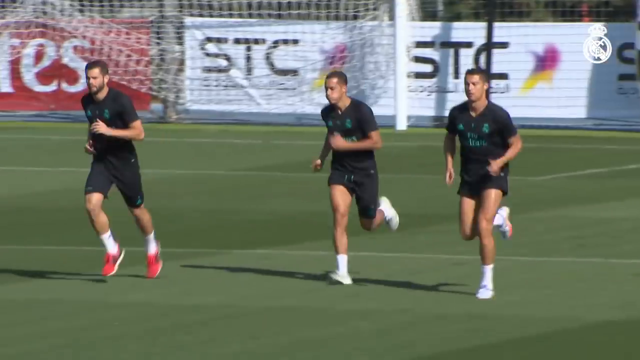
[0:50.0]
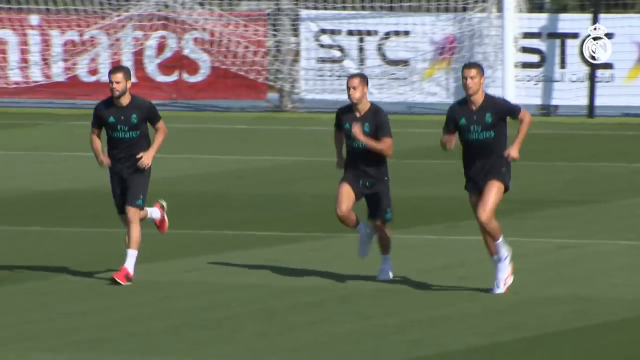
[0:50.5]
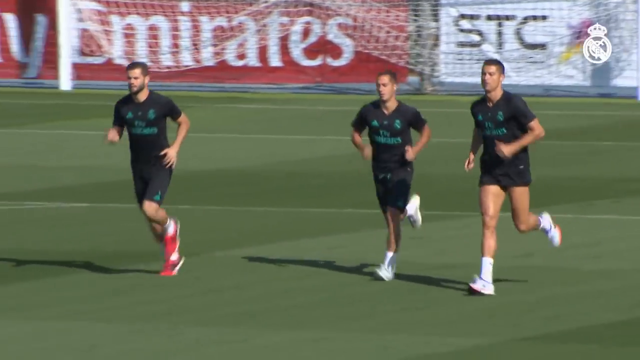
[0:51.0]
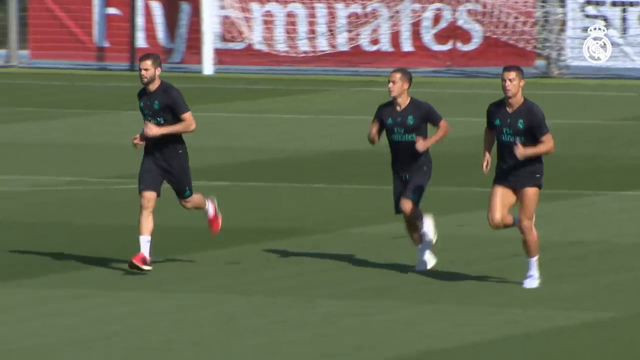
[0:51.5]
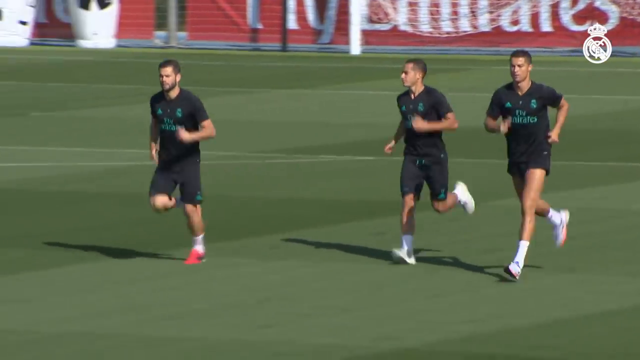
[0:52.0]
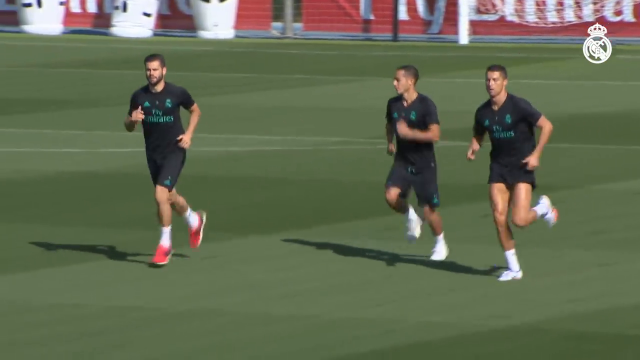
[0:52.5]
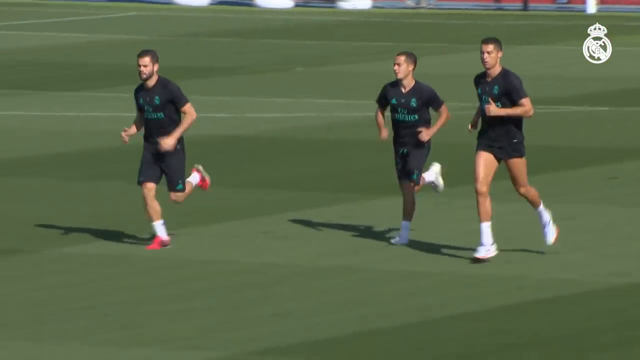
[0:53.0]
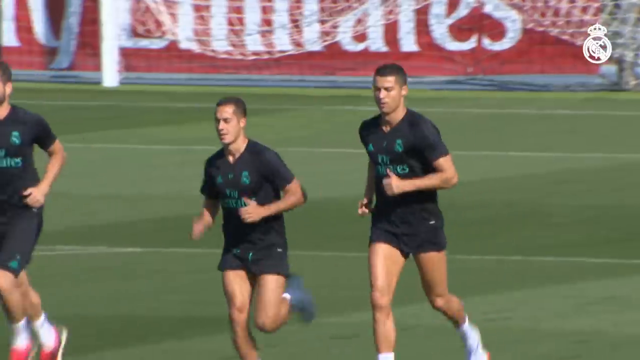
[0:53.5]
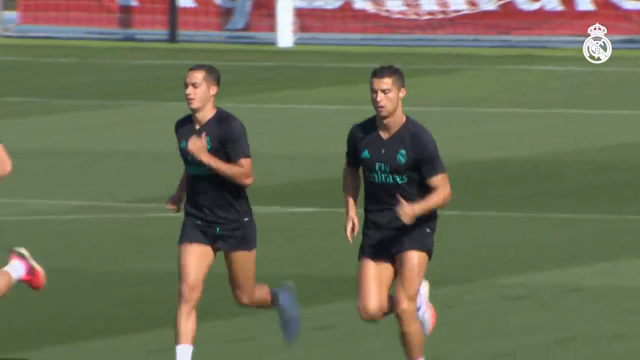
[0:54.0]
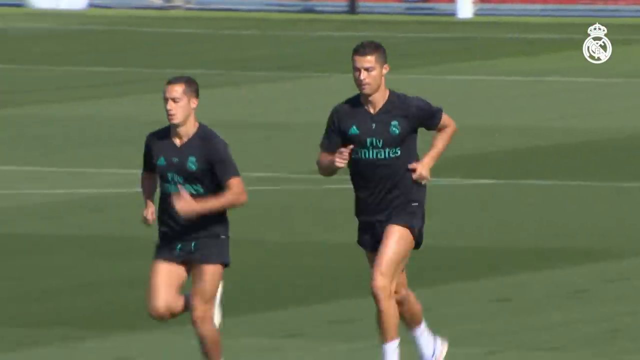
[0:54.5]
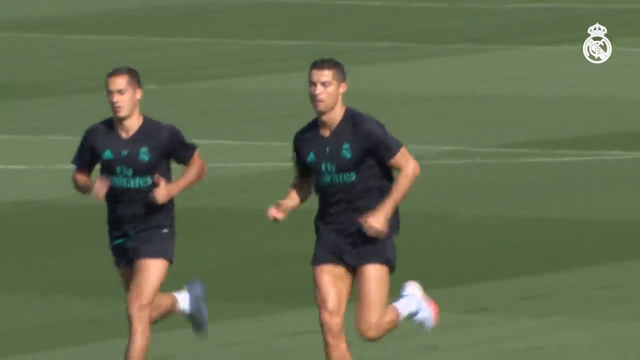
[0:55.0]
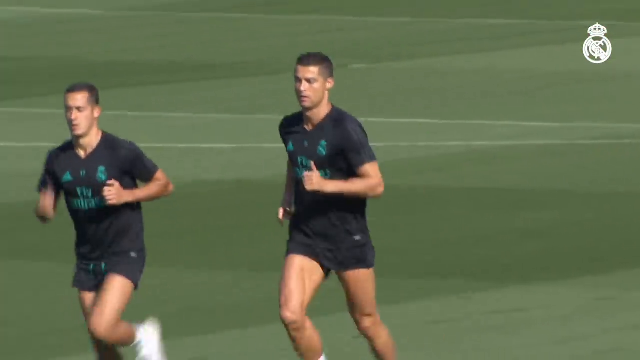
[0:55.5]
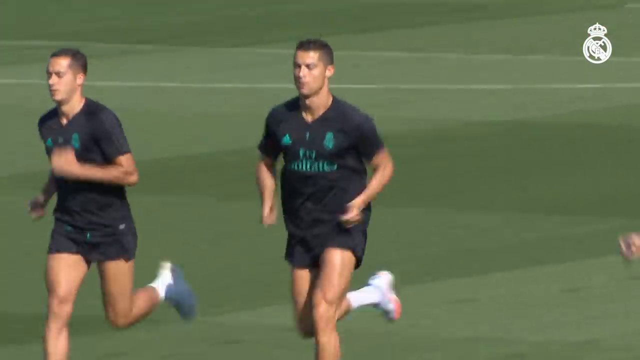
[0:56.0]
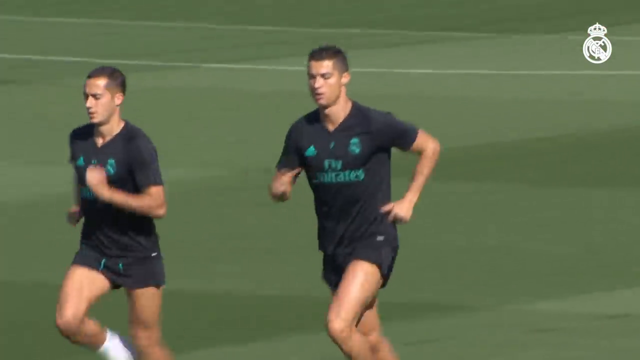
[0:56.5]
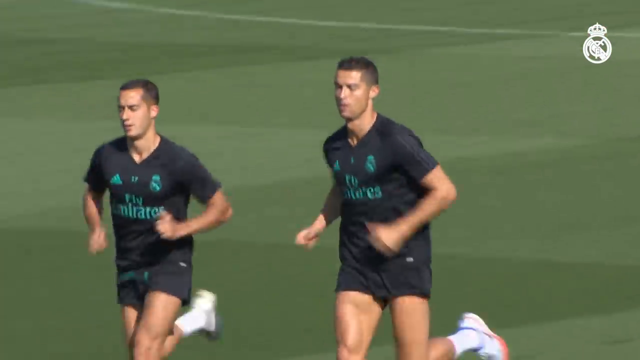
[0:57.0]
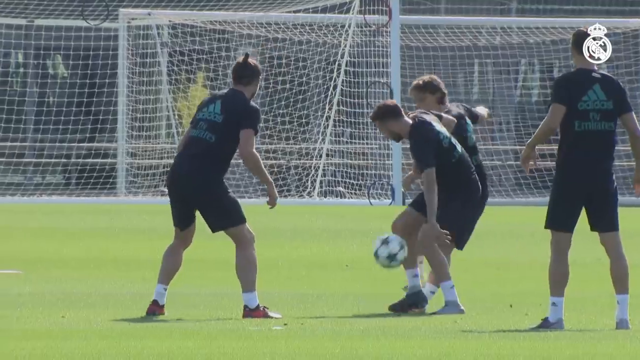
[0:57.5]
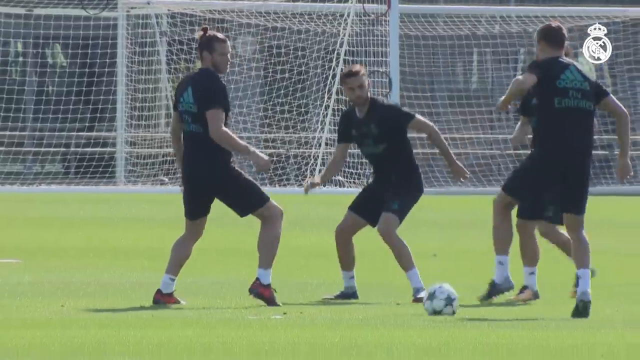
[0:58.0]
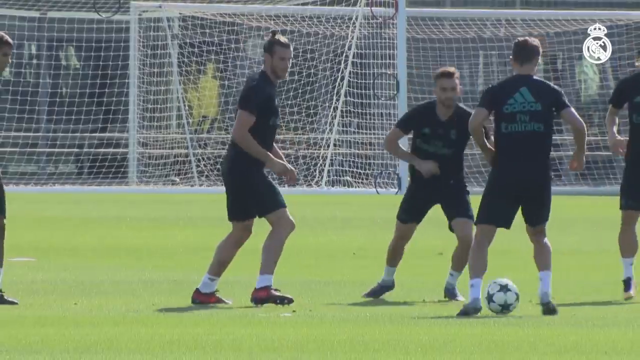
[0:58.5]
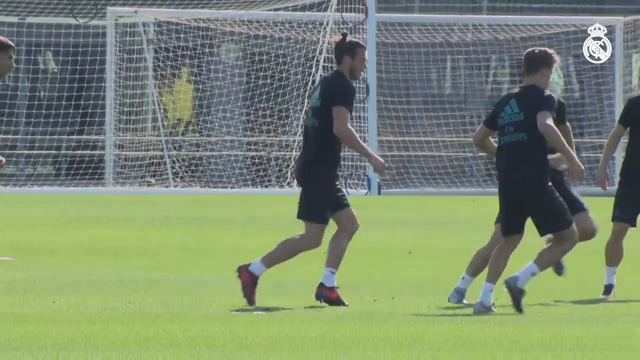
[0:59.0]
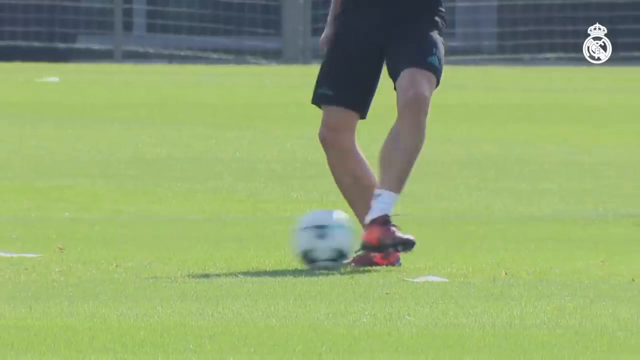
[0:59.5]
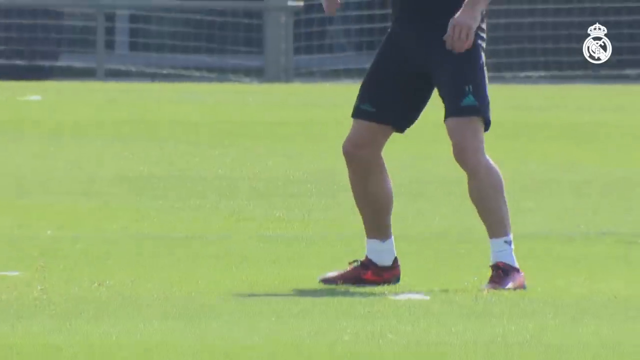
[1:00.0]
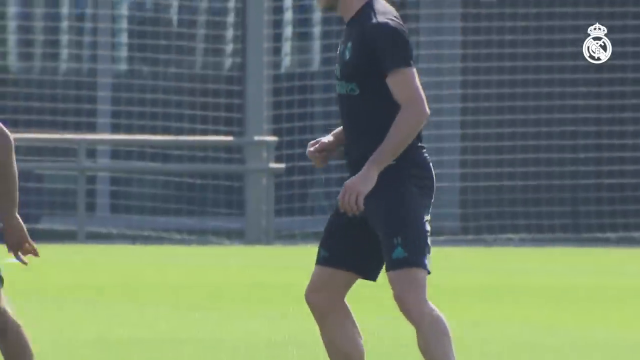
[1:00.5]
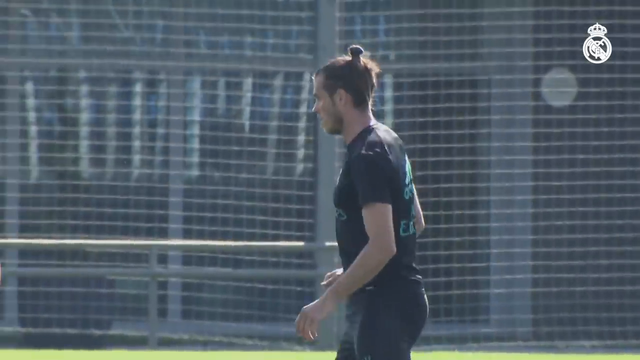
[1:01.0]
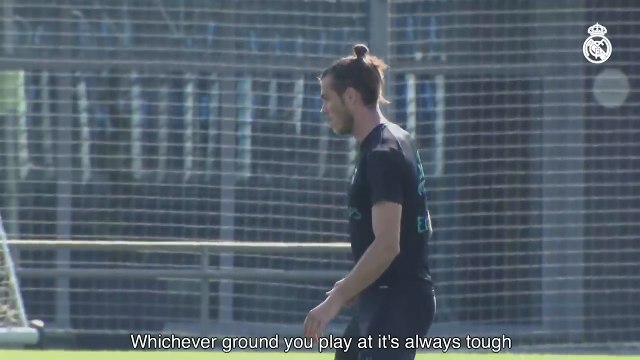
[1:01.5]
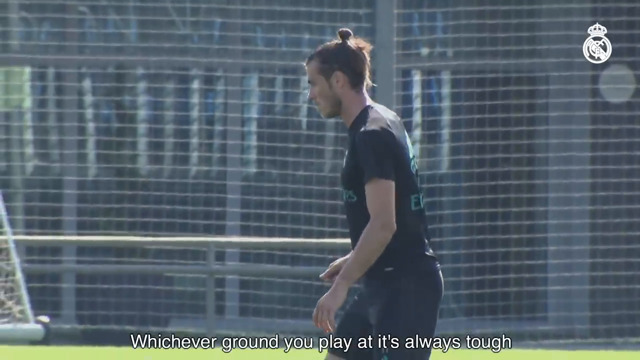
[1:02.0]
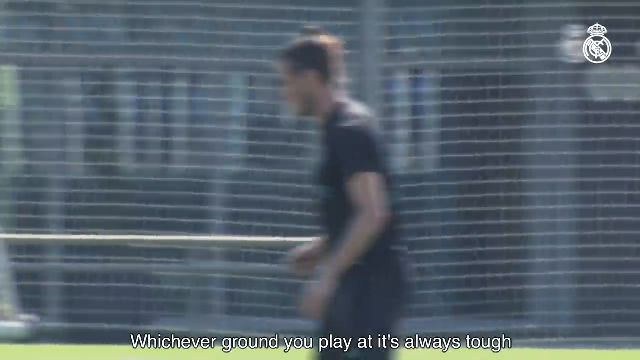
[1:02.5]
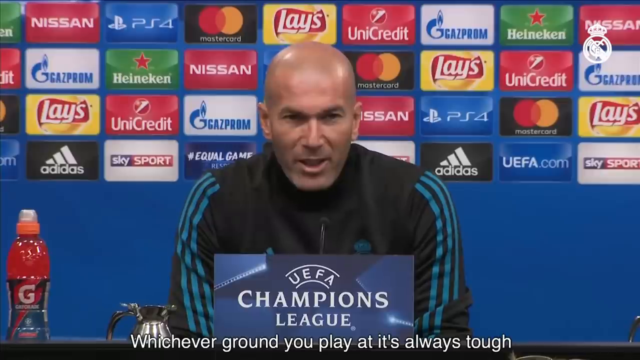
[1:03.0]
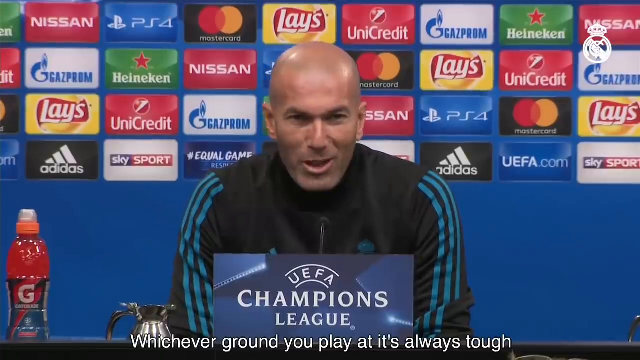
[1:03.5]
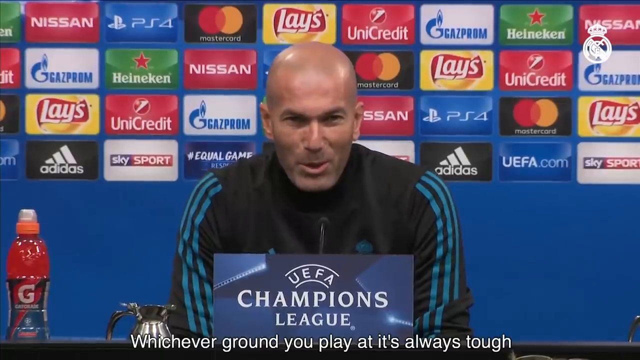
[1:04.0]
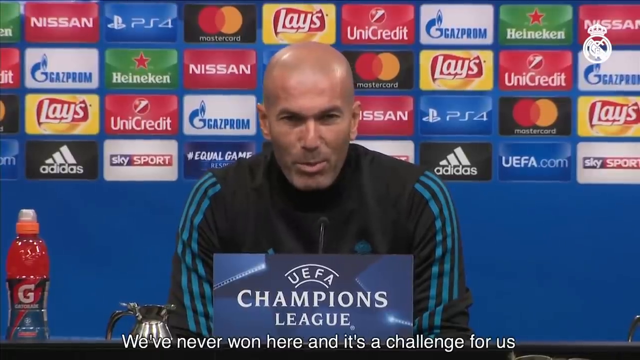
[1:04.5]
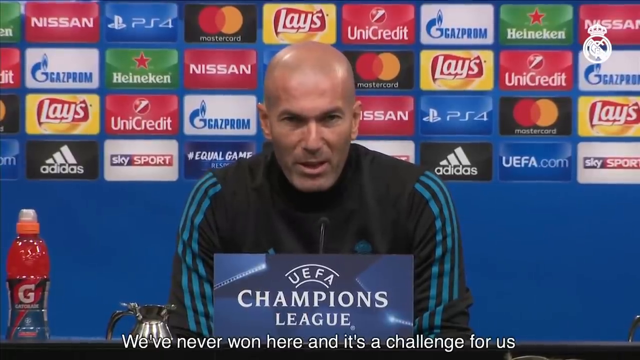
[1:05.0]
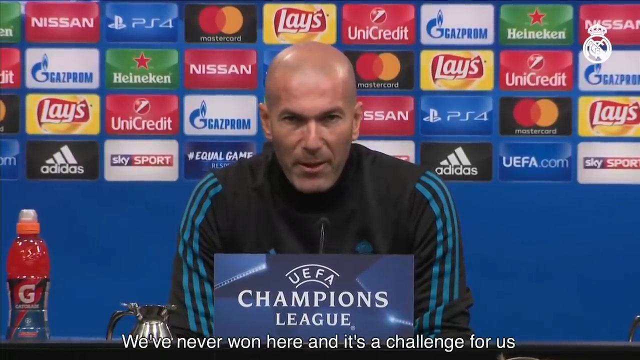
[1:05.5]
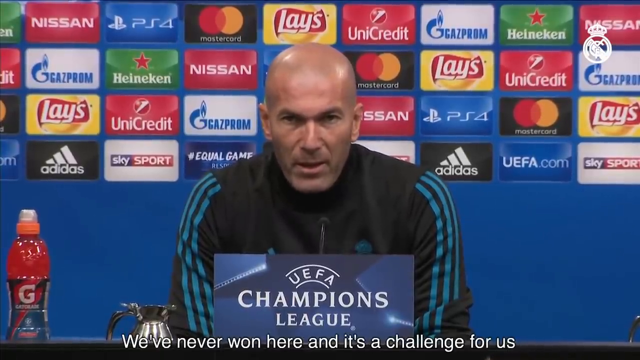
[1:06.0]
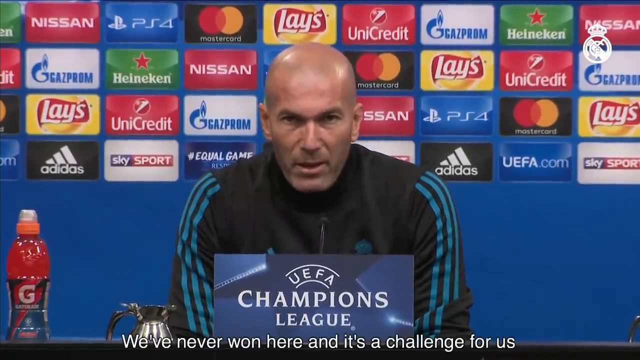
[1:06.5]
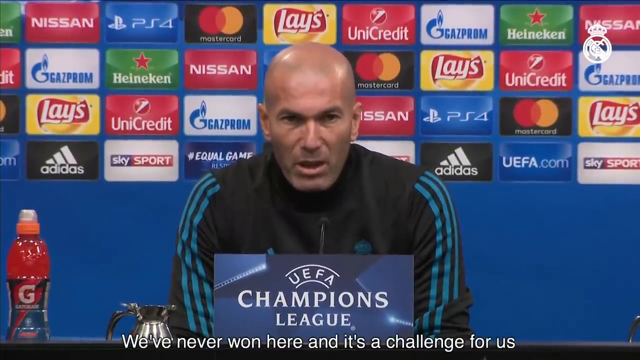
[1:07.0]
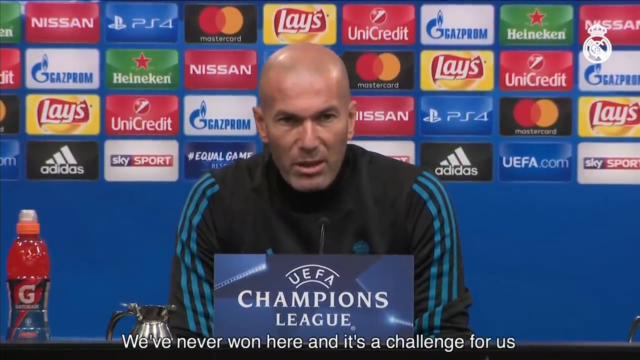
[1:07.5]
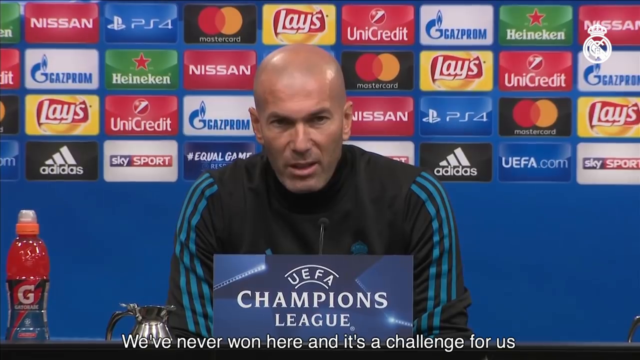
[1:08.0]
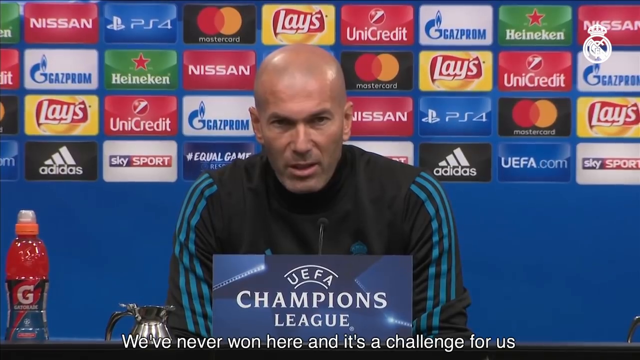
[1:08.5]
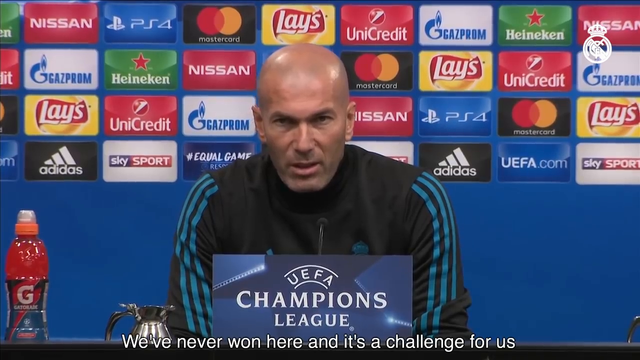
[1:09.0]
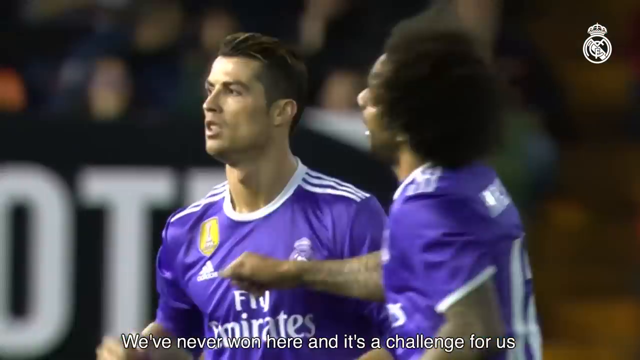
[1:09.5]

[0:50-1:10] The scene transitions to a different football stadium, this one outdoors rather than indoors like the earlier pitch. Three players run along the pitch as if they are working out and going for a jog. Various players then perform drills and kick the ball around. The weather on the pitch looks fair and sunny. The scene goes back to the press conference, where the tracksuit-wearing man with the shaved head is speaking again, with English captions running along the bottom of the video.